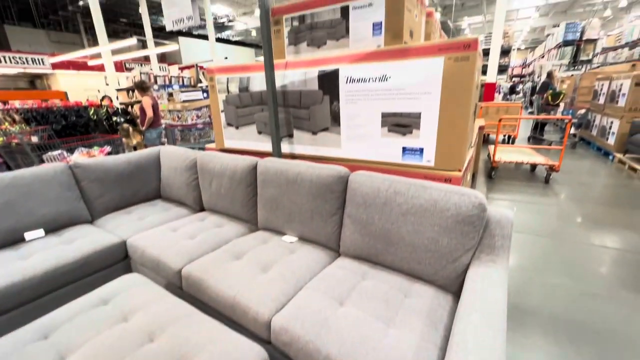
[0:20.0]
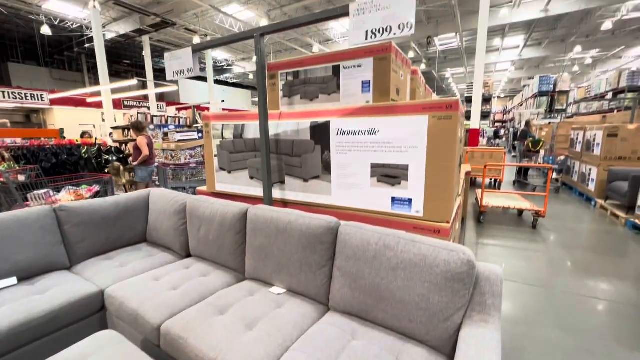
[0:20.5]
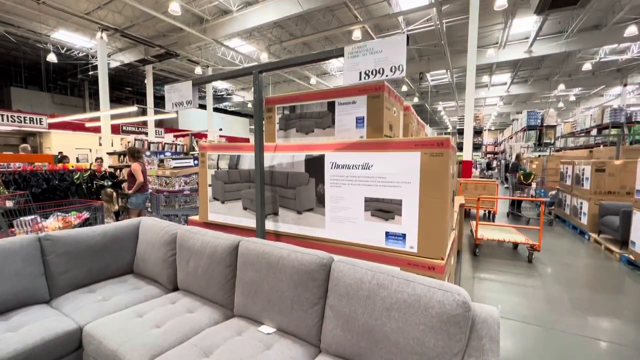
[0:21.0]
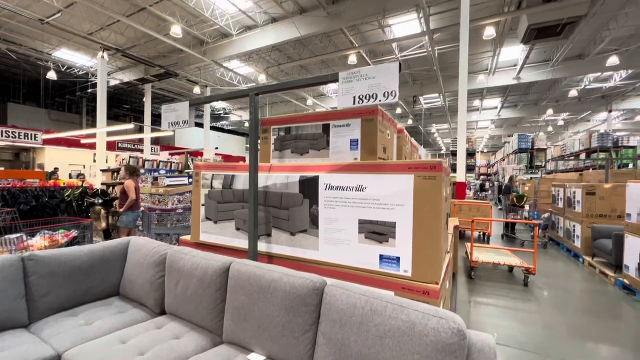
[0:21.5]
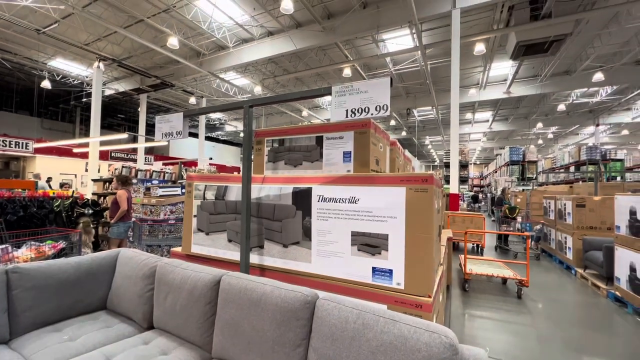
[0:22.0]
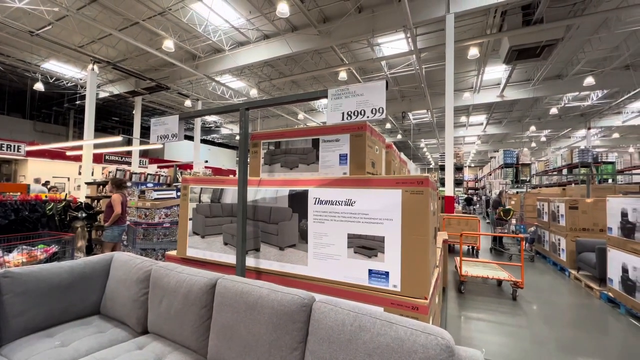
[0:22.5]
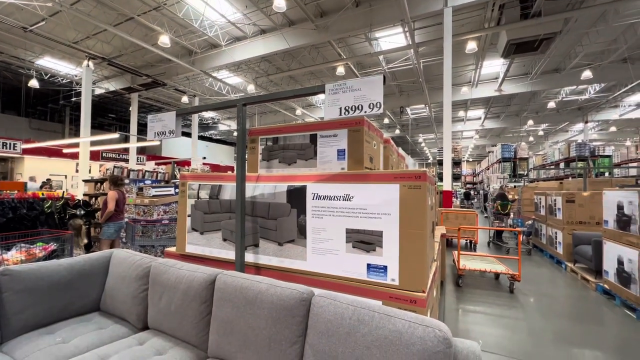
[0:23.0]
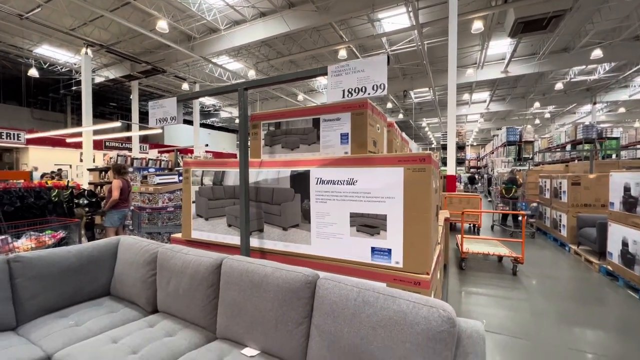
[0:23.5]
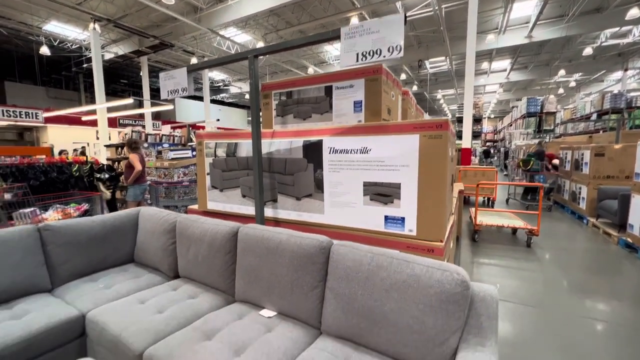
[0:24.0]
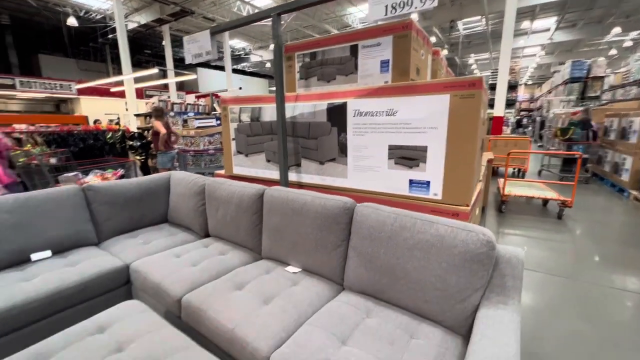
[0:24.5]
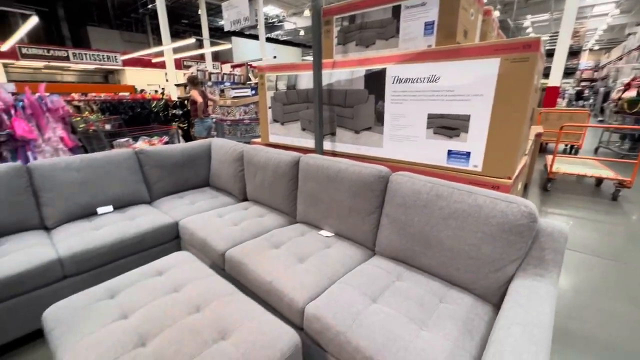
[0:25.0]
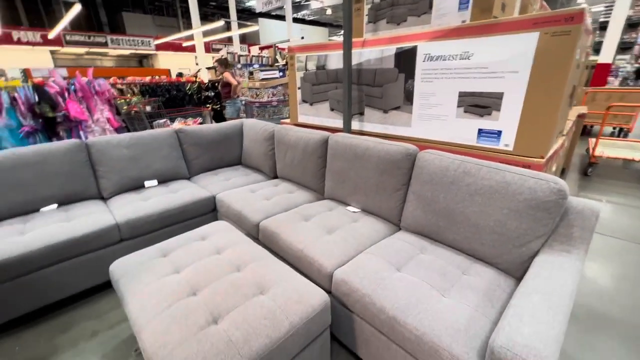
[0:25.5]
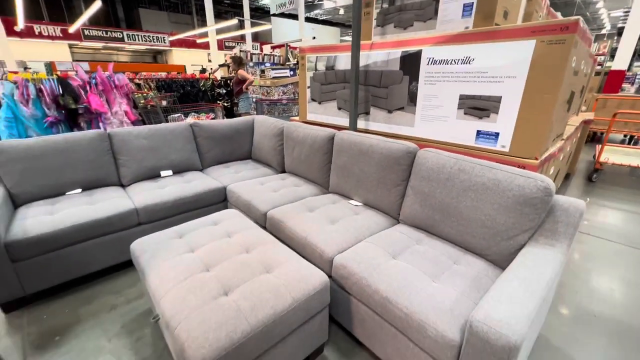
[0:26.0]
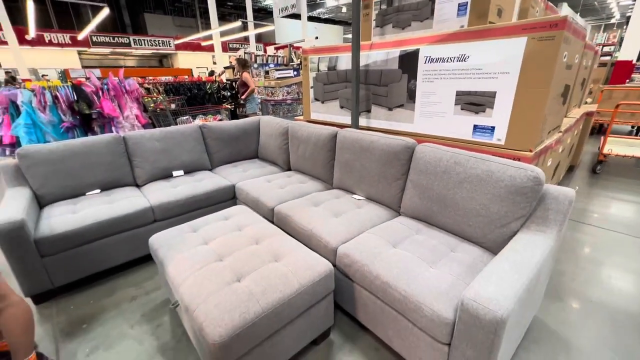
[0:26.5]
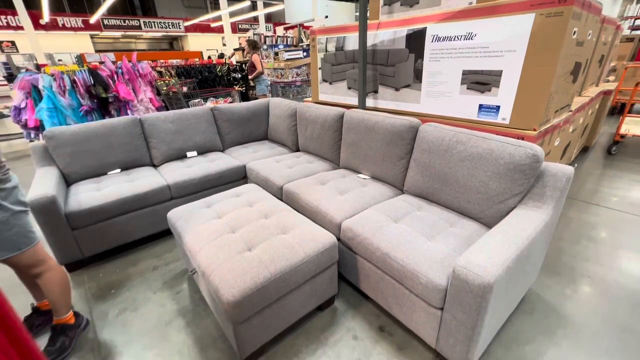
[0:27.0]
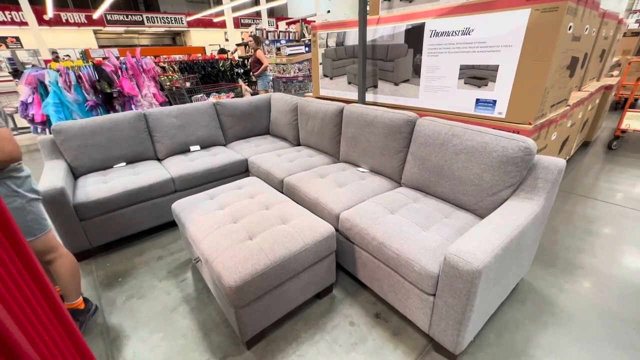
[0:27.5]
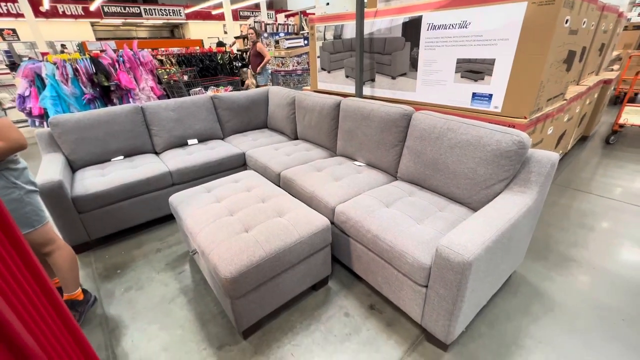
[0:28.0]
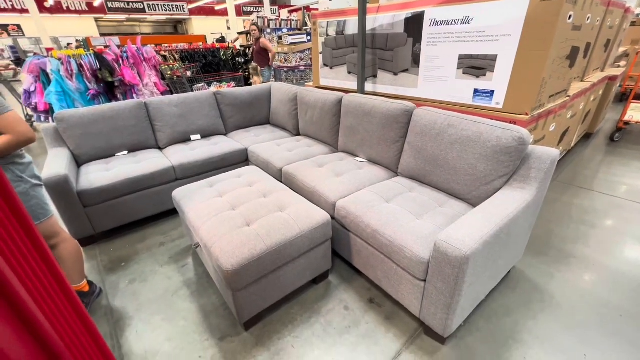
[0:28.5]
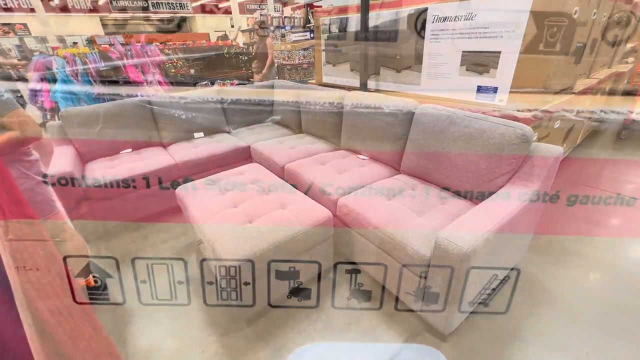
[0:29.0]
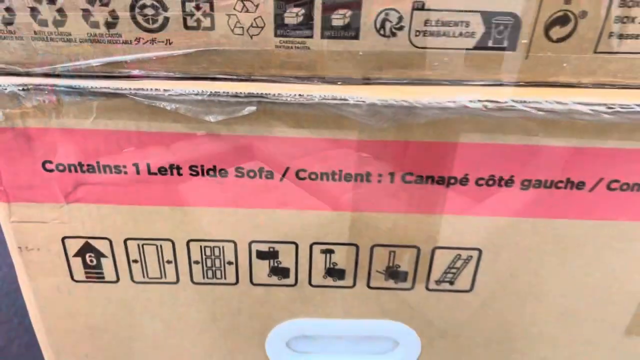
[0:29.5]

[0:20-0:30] In the background is the spot where the person was standing while recording the large box. The couch is displayed and built in front of the boxes of the product. Judging by the price tag shown above the couch, this looks like a Costco warehouse. The price is listed at $1,899.99. Other shoppers go about their day, shopping behind the different aisles and large boxes. The corner of the box is then shown, with text saying "contains one left side sofa" along with a Spanish translation. Underneath the text are different small images that look to be the tools needed to build it.